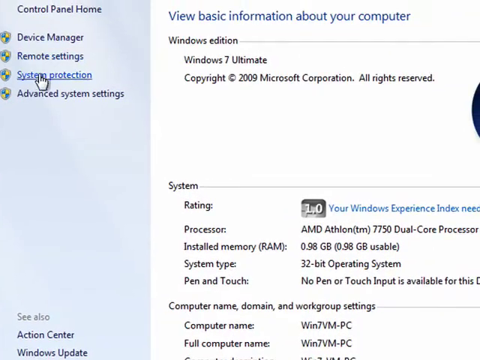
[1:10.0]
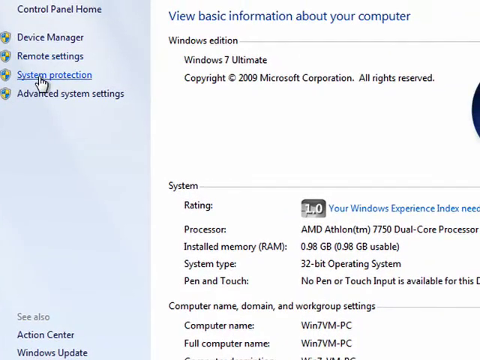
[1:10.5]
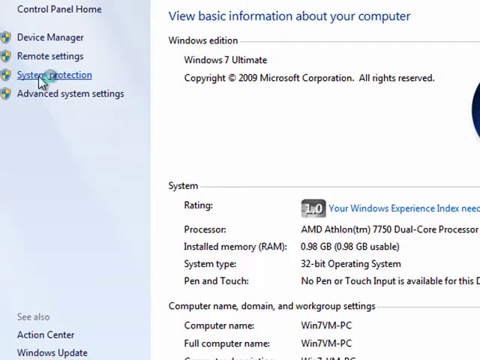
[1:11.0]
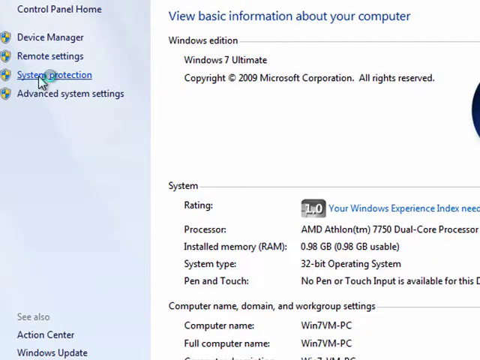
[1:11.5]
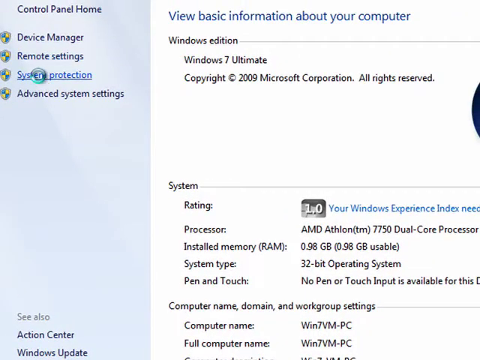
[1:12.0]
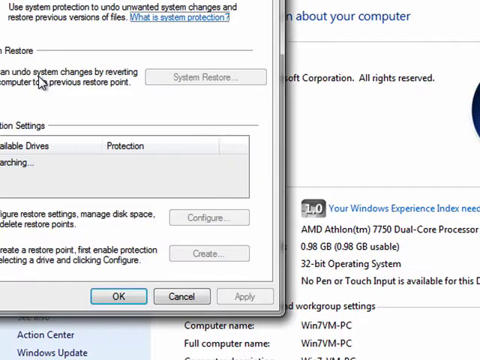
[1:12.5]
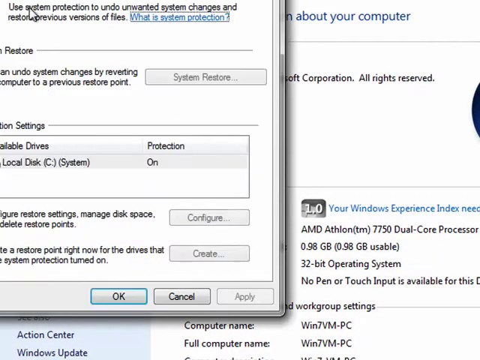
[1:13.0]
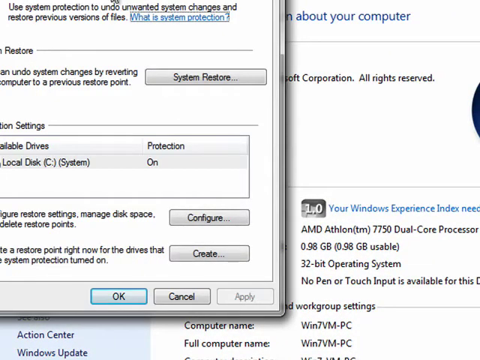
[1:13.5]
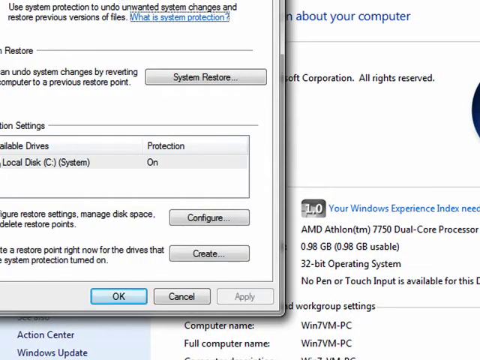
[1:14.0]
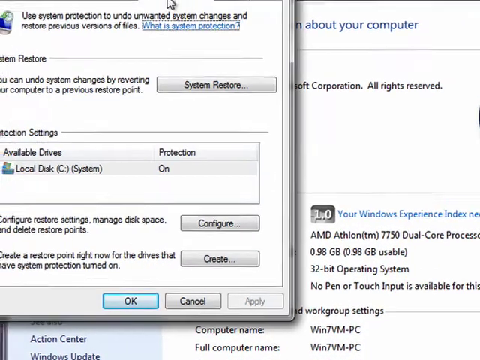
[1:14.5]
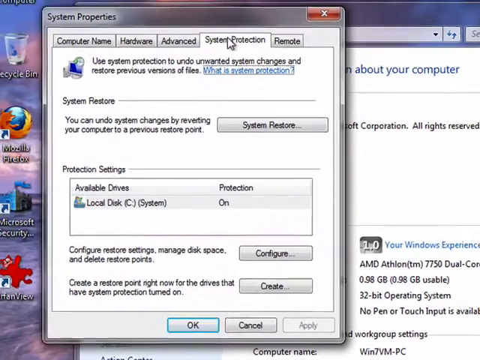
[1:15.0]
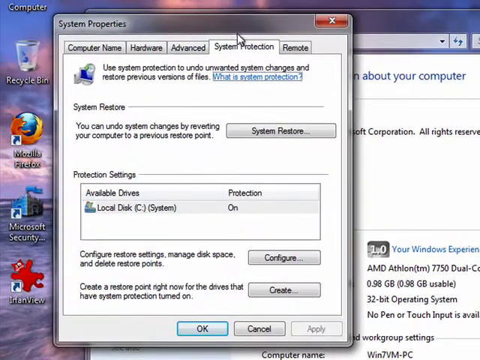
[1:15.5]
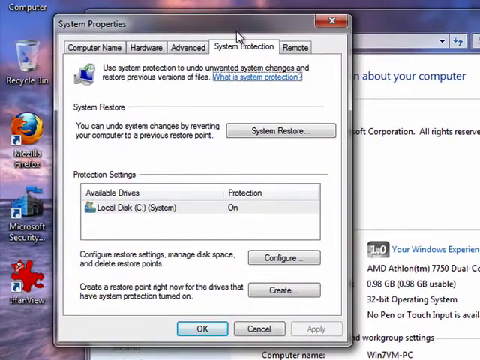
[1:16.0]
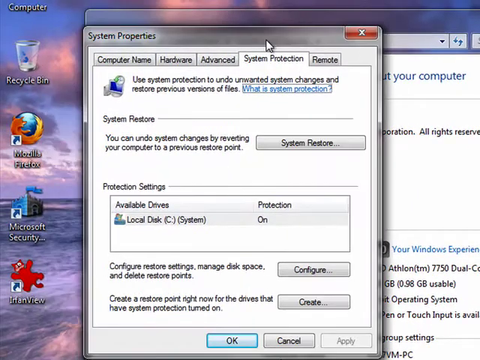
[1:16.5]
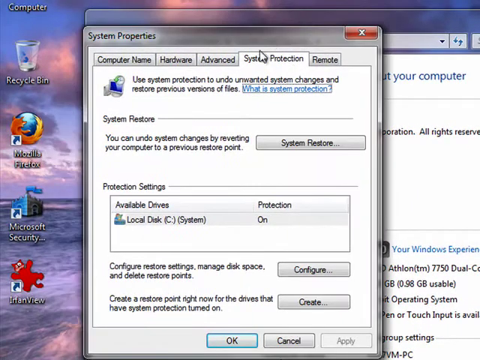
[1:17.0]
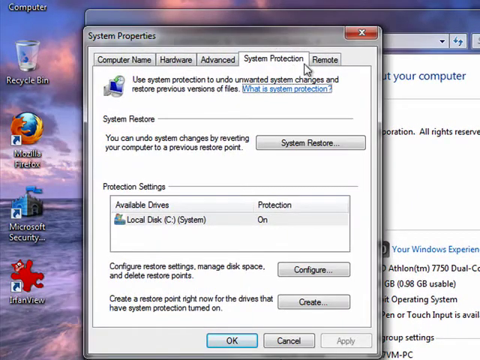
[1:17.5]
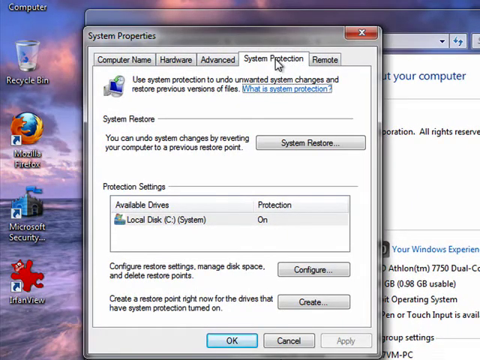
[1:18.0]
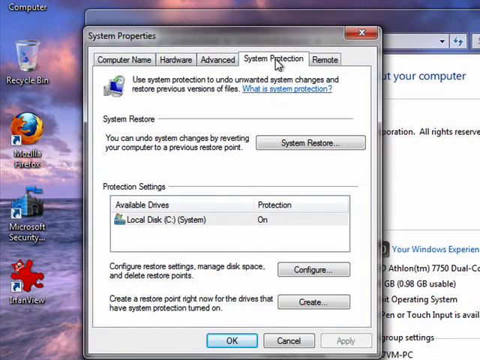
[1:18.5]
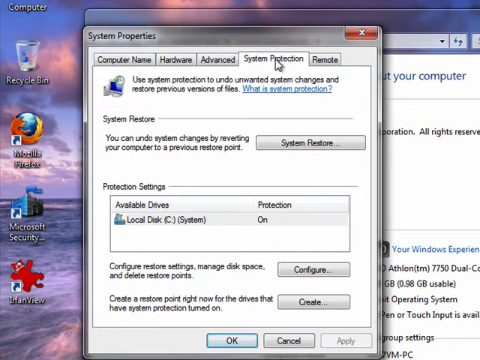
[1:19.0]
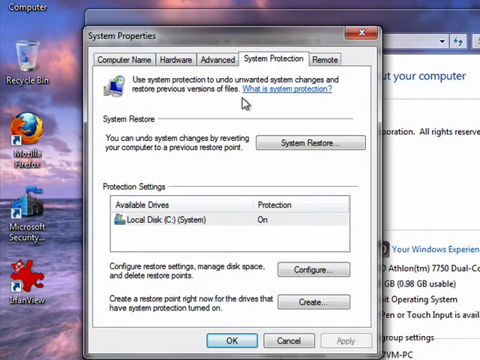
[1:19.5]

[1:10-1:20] System properties opens. The system protection tab contains various areas, such as system restore, along with other options. He clicks on various options, and text reads "Windows 7 Ultimate, Copyright 2009, Microsoft Corporation."